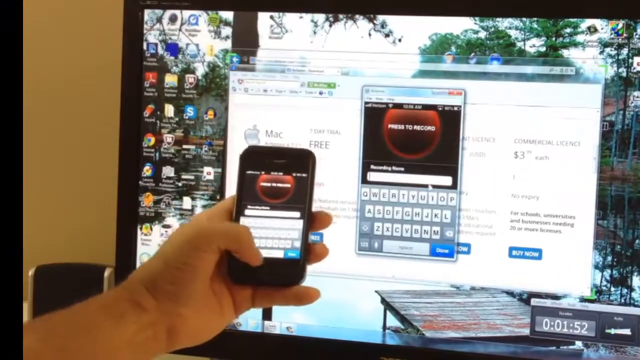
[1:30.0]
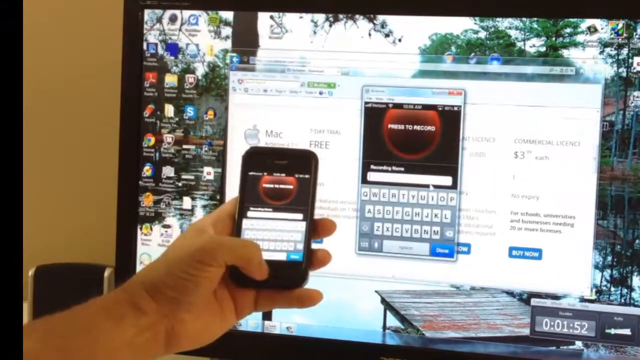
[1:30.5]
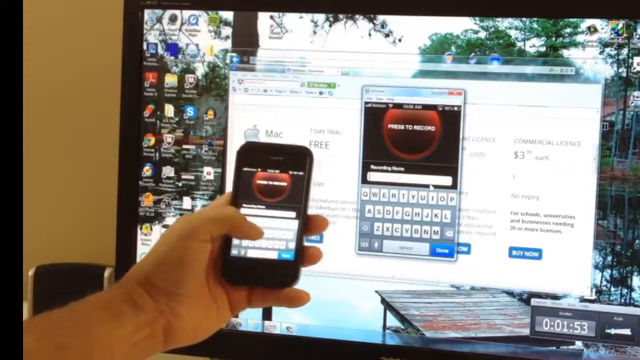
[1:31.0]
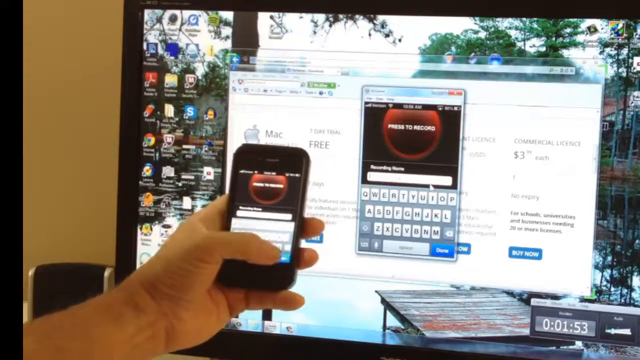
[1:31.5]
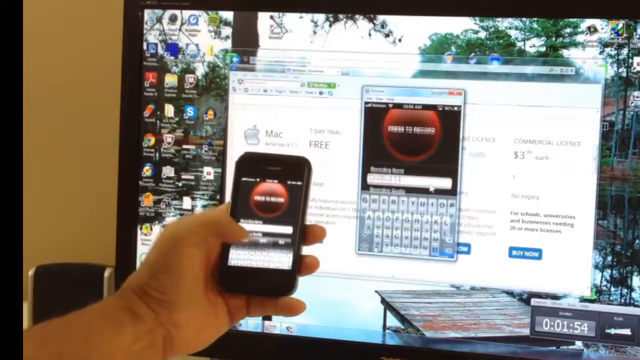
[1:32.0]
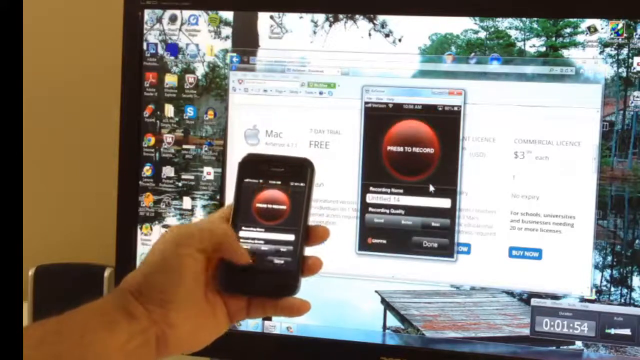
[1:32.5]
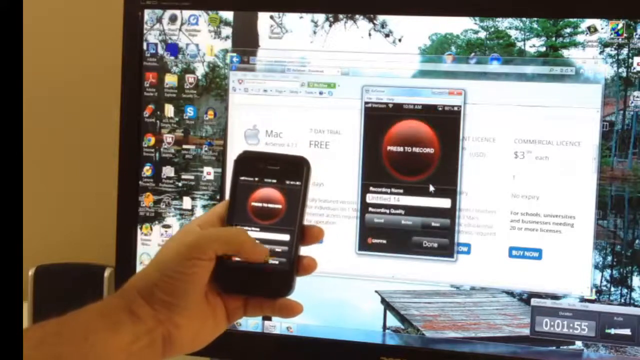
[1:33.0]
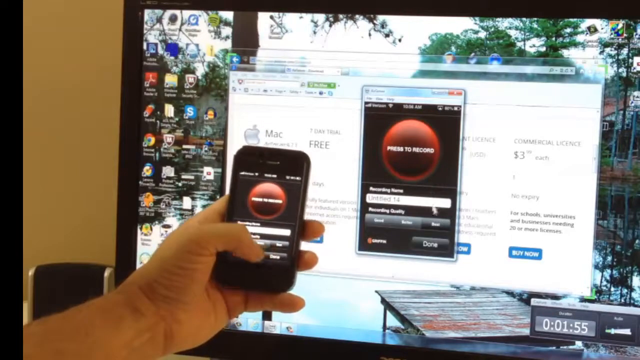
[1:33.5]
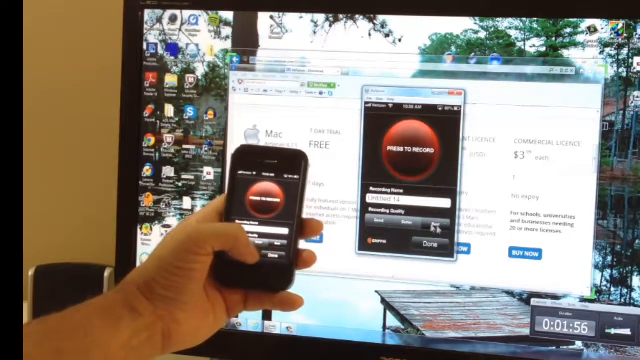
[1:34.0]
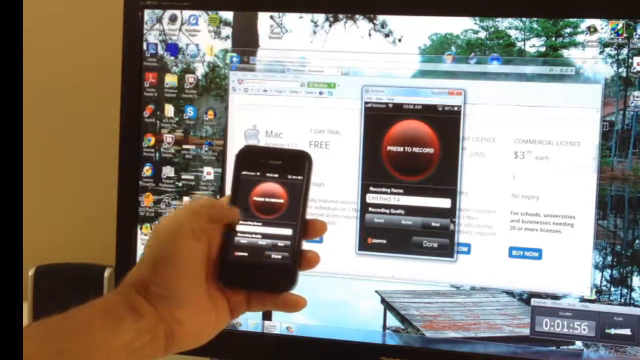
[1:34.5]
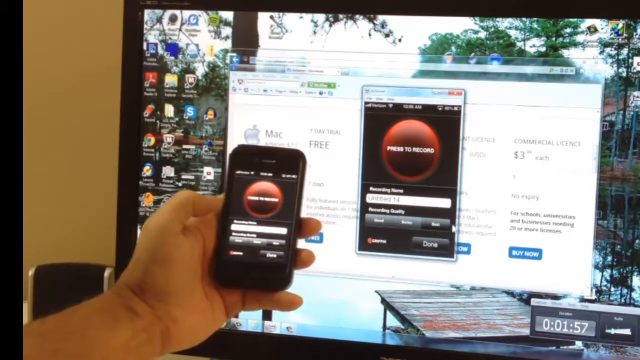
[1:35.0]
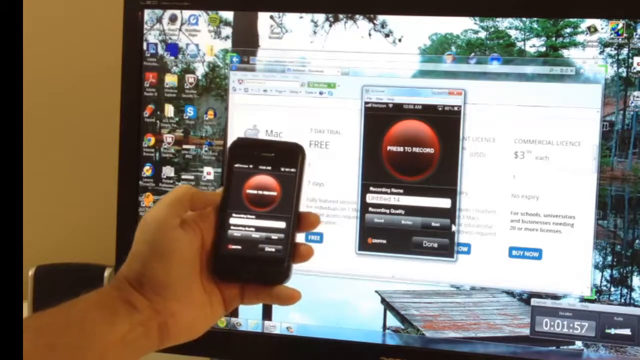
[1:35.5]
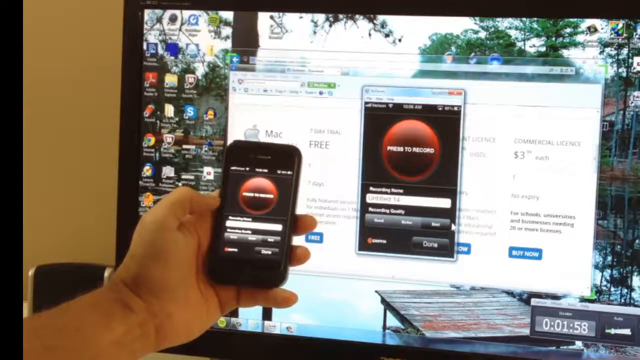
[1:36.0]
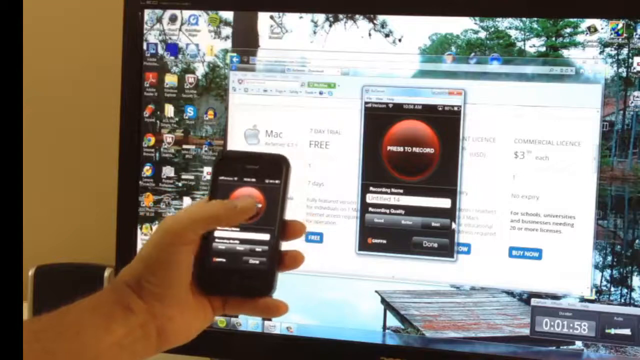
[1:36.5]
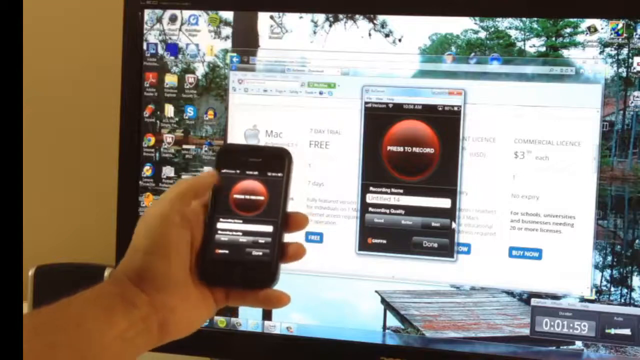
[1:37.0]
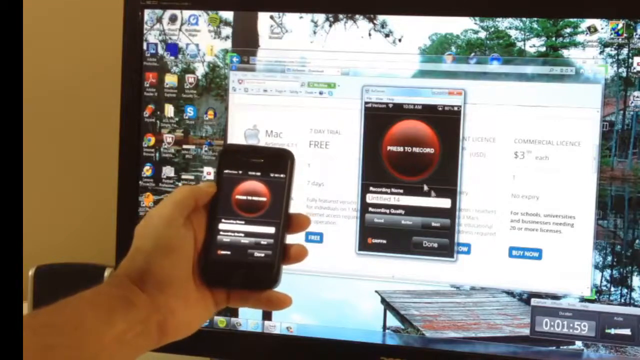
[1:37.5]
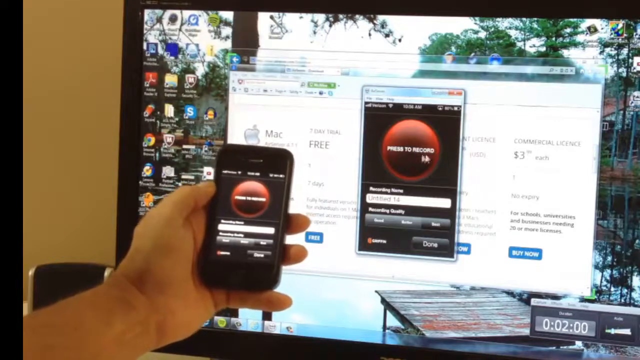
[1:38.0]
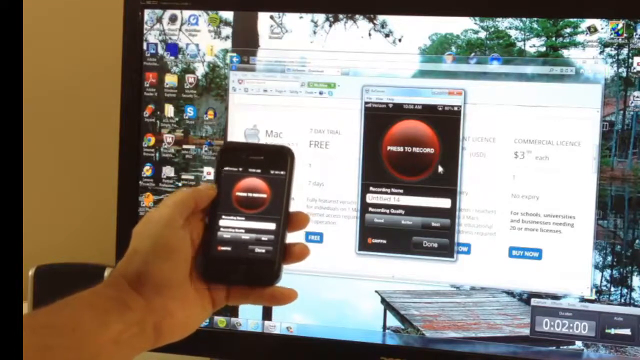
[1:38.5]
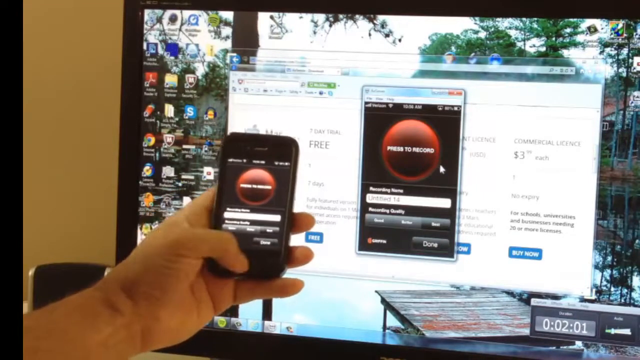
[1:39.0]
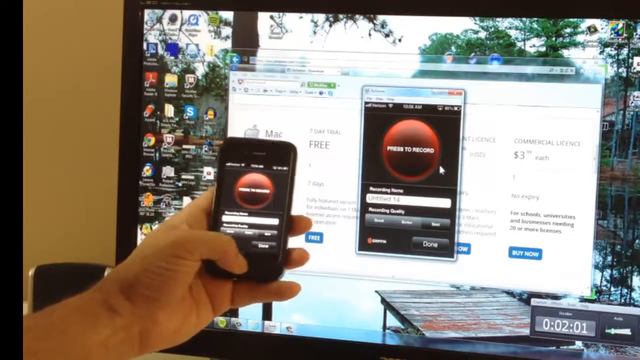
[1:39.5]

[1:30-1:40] What seems to be a person holds his cell phone in his left hand. The screen is on and he seems to be typing, since a keyboard is visible on it, and there is also a red circle. Behind him is a computer screen with a window open in the shape of a cell phone, showing exactly the same thing as his phone. Whatever he types on the phone seems to be typed on the computer as well, so the computer seems to be mirroring what he does on the phone. He seems to navigate everything with his left thumb, apparently demonstrating the software that lets his phone screen be viewed on his computer.